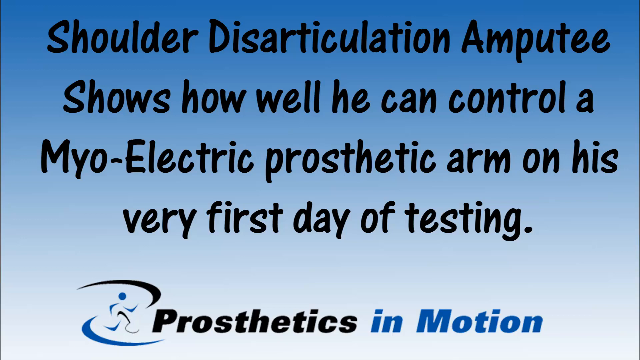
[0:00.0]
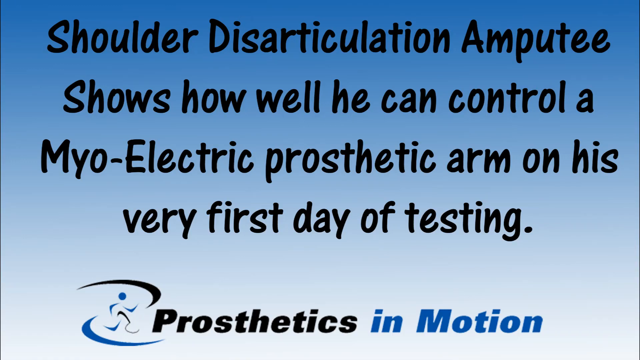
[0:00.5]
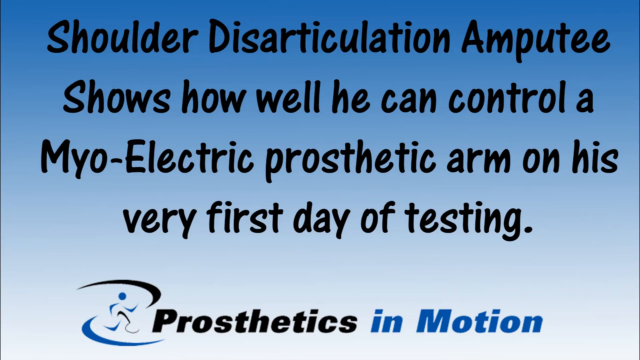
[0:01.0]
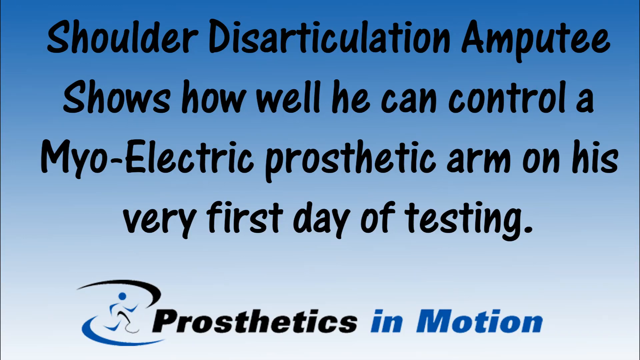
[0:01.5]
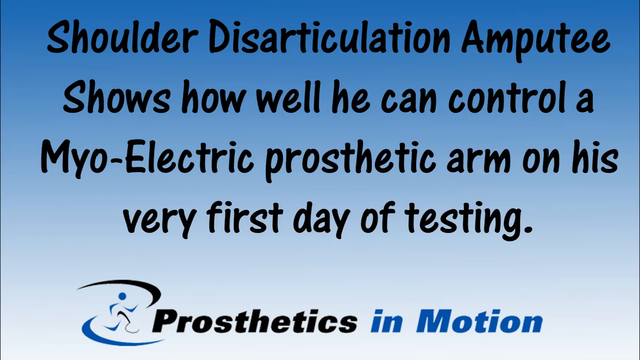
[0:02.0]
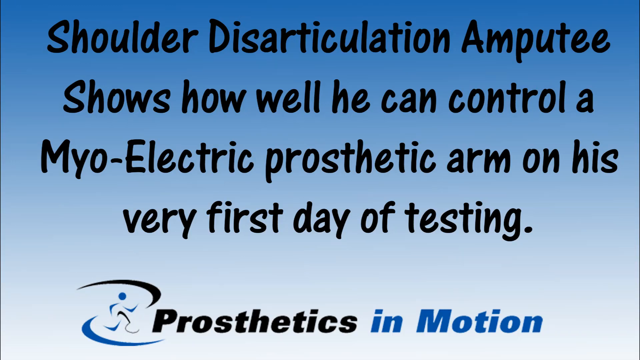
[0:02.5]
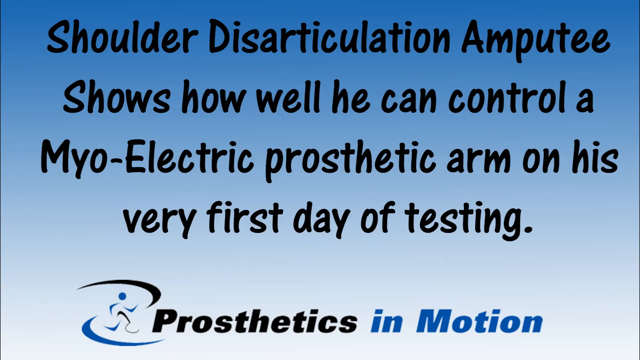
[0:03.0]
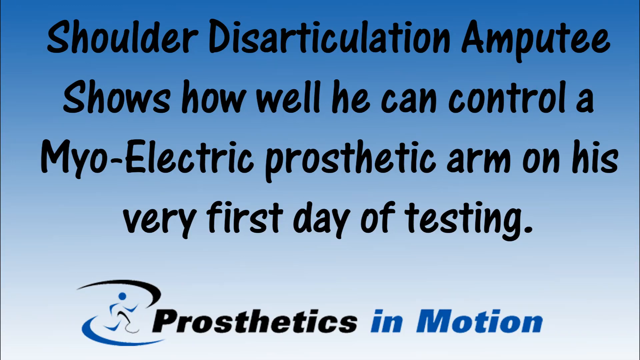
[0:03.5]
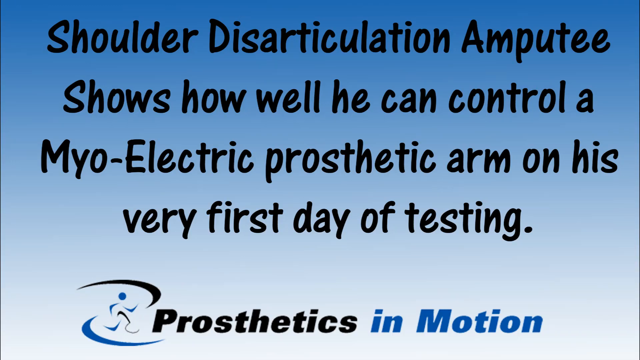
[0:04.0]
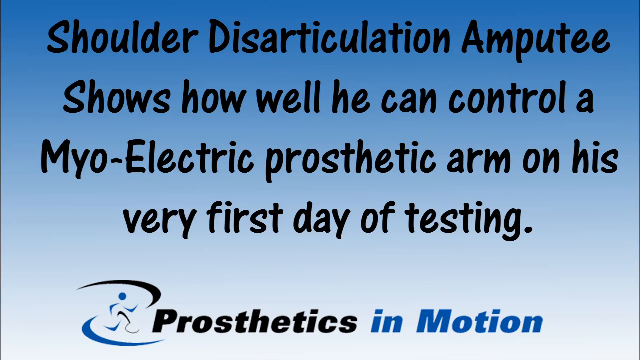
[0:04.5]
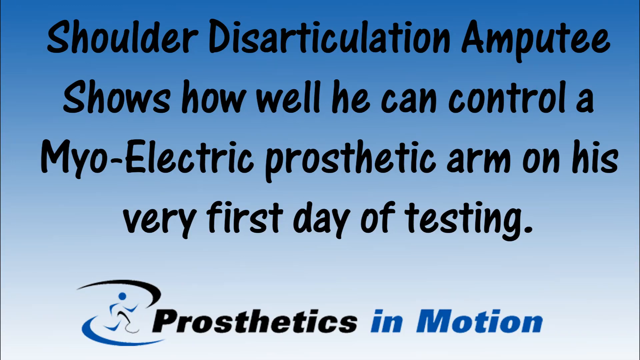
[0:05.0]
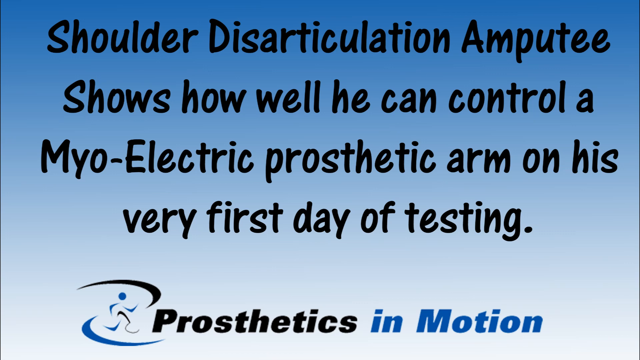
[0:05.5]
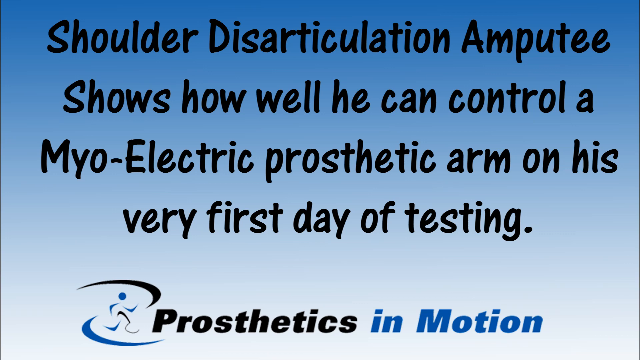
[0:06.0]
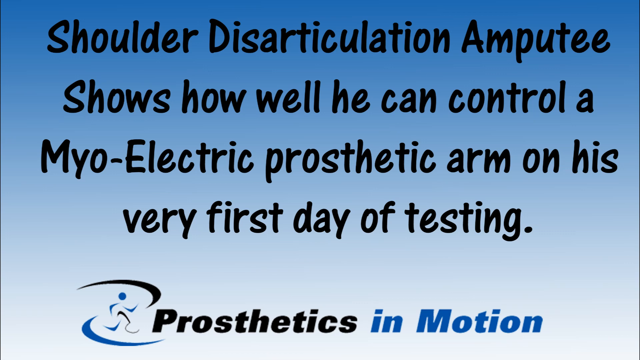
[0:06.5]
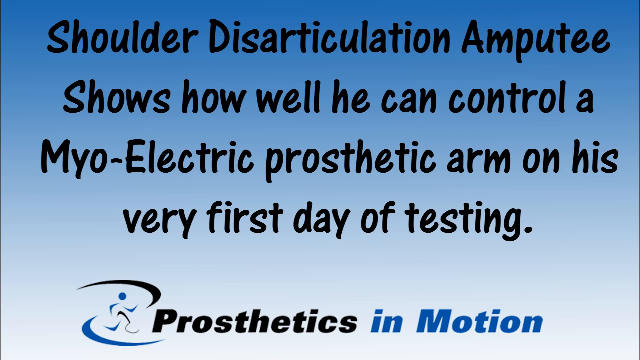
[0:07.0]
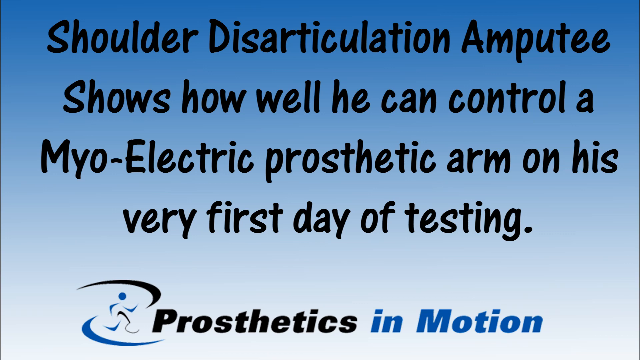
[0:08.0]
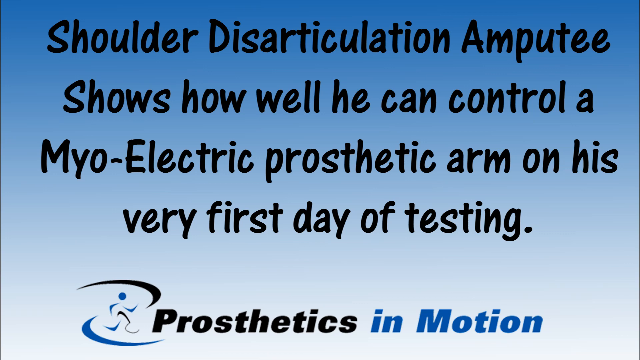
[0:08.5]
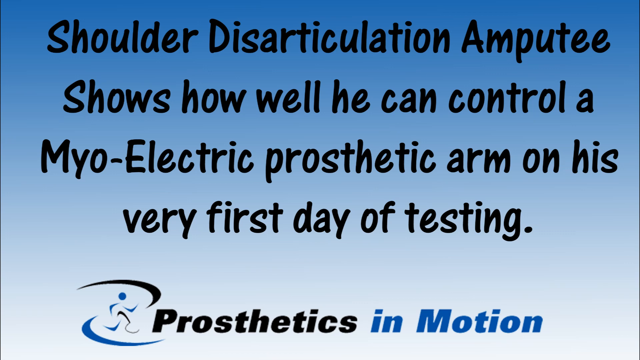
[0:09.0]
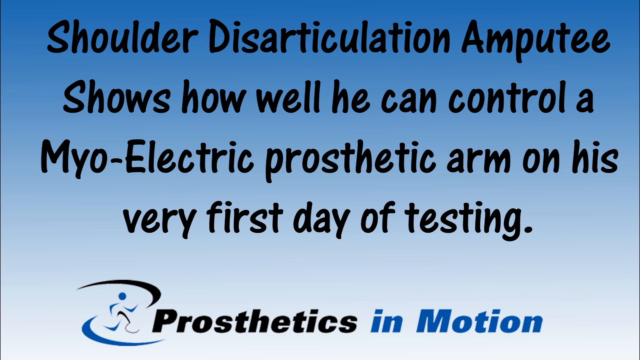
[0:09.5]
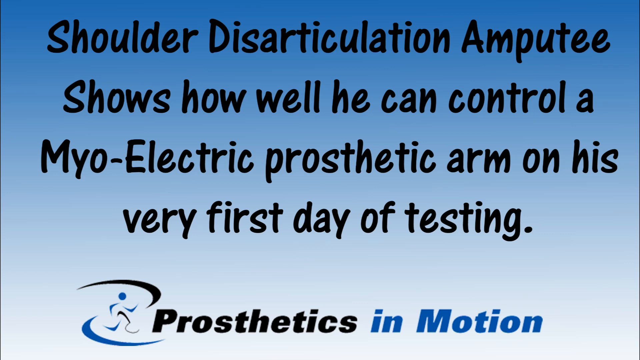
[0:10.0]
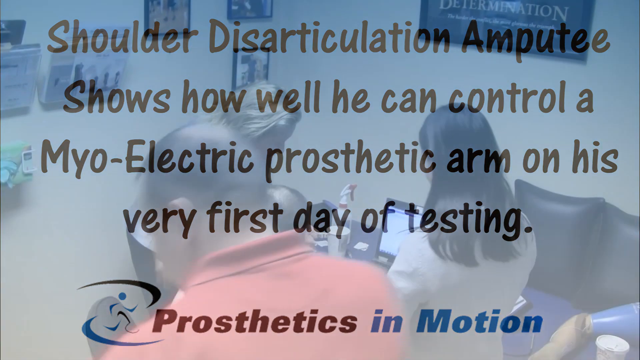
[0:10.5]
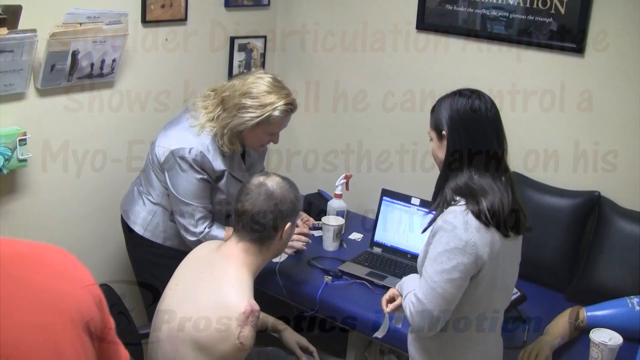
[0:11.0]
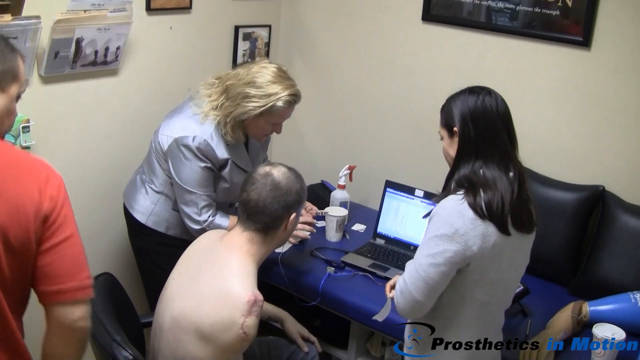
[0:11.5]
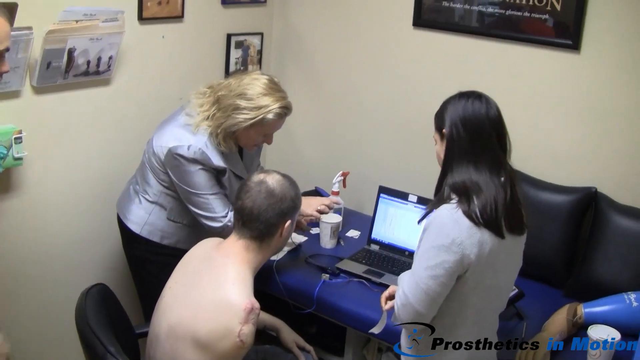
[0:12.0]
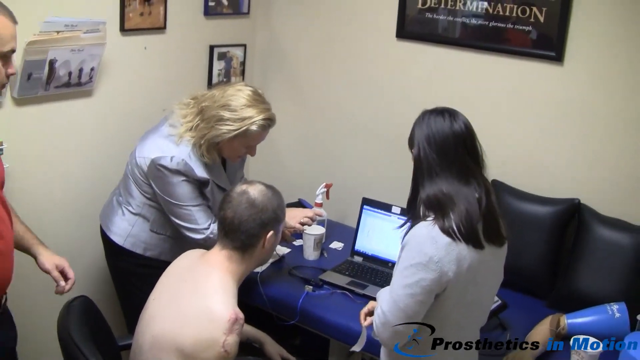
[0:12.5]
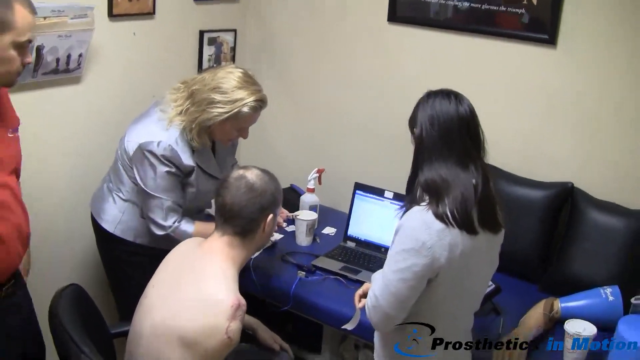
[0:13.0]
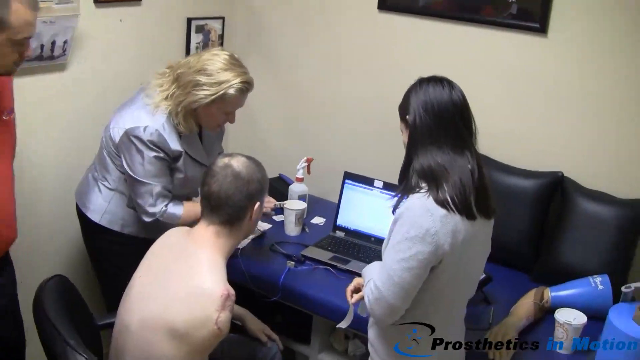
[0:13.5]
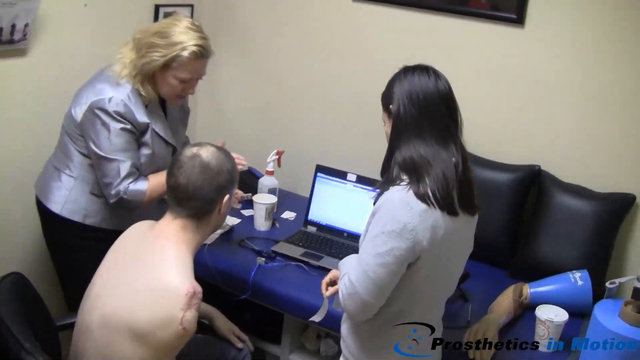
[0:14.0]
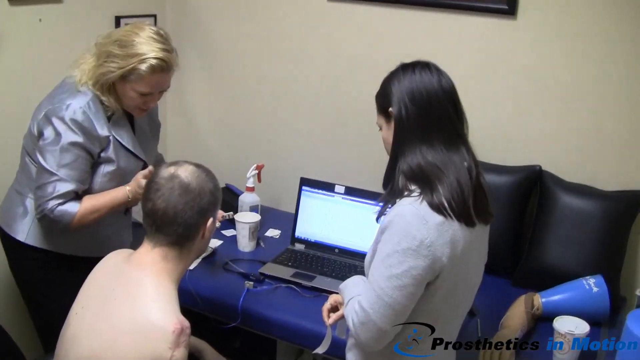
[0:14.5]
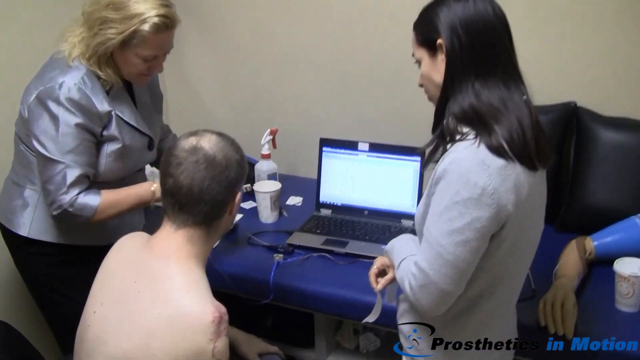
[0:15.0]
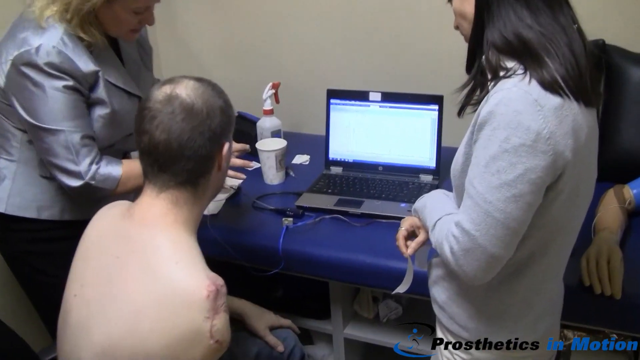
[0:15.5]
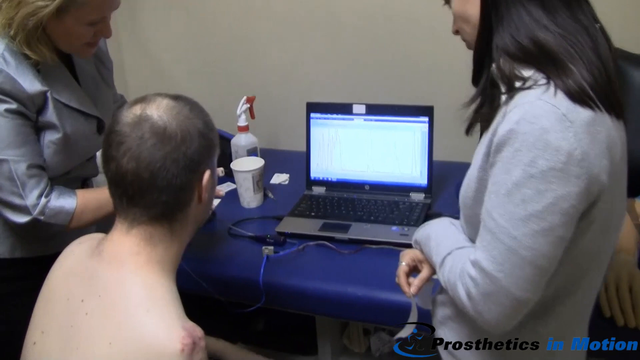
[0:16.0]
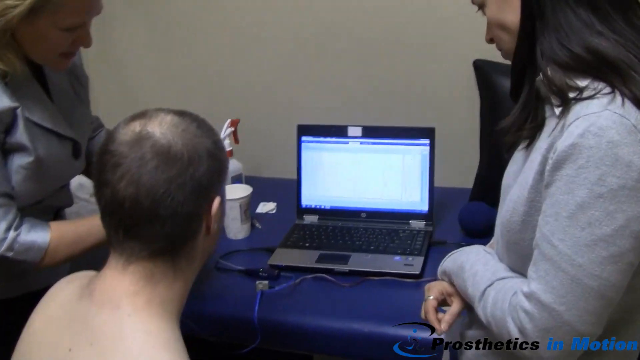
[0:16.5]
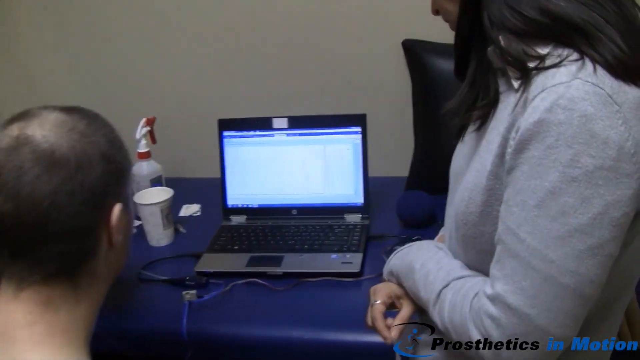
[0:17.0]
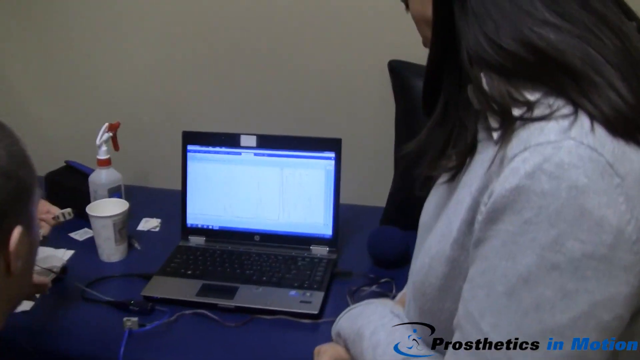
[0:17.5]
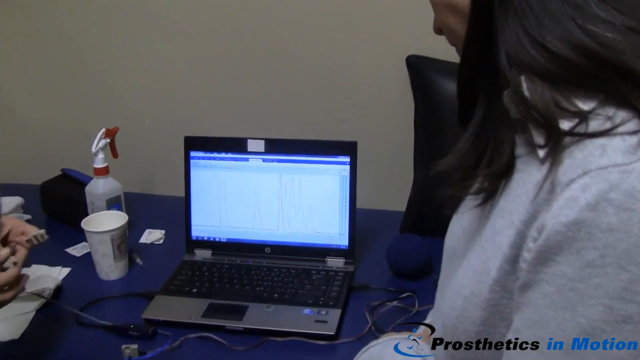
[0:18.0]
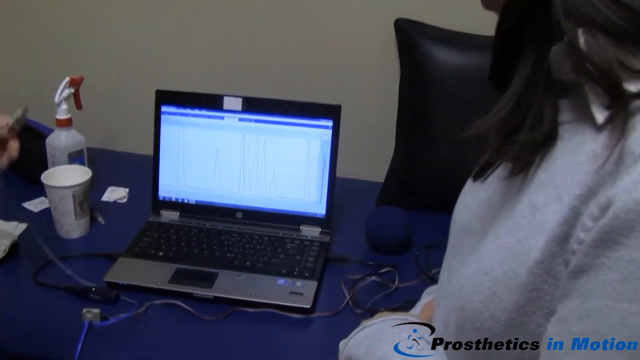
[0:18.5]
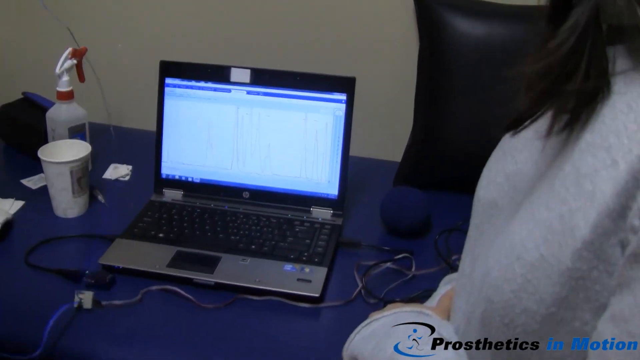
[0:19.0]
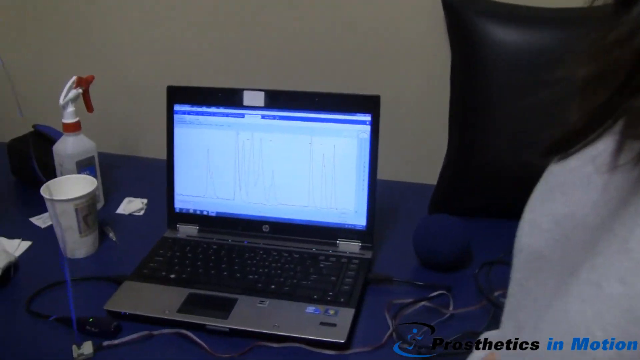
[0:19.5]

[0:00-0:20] The video opens on a title for Prosthetics in Motion, with a logo of a blue graphic person running with blades as feet. Text on the page reads "shoulder disarticulation amputee shows how well he can control a myoelectric prosthetic arm on his very first day of testing." The page has a blue background that is darker at the top and fades to almost white at the bottom. The scene then changes to a doctor's office, where a blonde woman in a shiny grey-silver jacket leans over a blue desk with a laptop and connects some wires. A shirtless man is sat on a chair in front of the blue desk; at his right shoulder there is an amputation, so he has no arm from the shoulder blade. Also in the room is a young woman with long black hair, and behind the woman in the silver jacket a man in a red t-shirt looks on. The woman in the silver jacket demonstrates with her hands to the shirtless man, explaining something she holds in her hands, while the woman with long black hair looks on. The woman in the silver jacket then lifts something up.